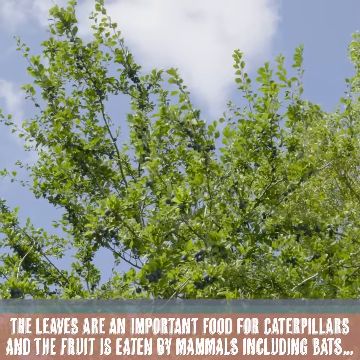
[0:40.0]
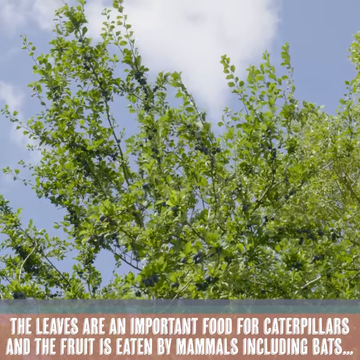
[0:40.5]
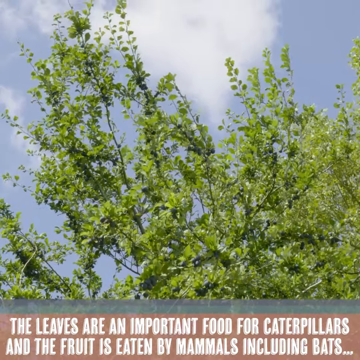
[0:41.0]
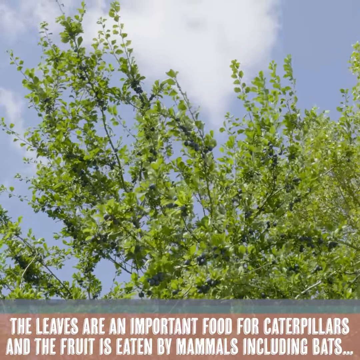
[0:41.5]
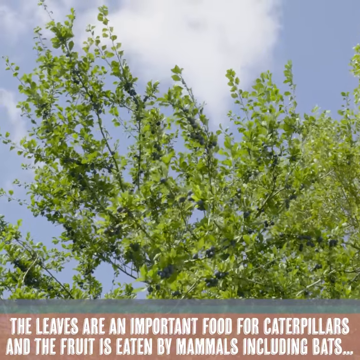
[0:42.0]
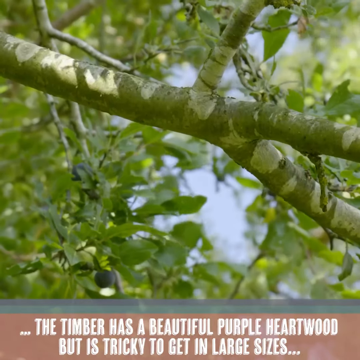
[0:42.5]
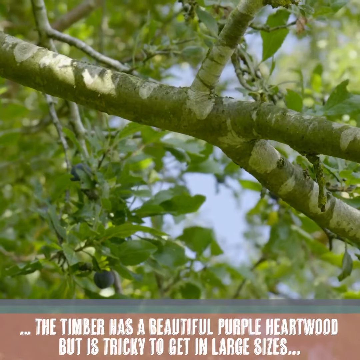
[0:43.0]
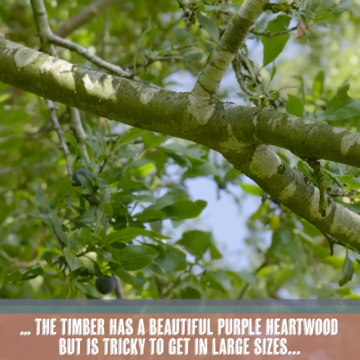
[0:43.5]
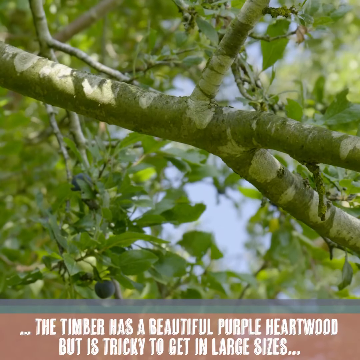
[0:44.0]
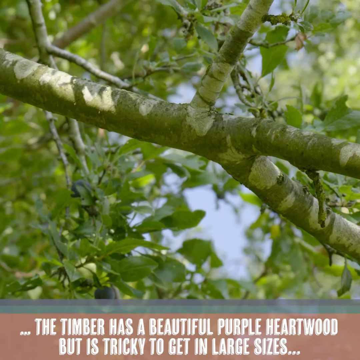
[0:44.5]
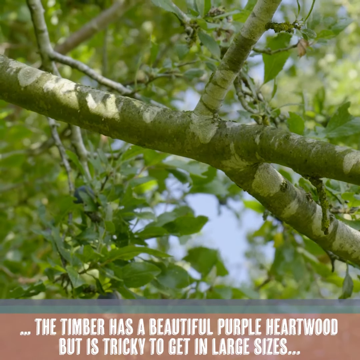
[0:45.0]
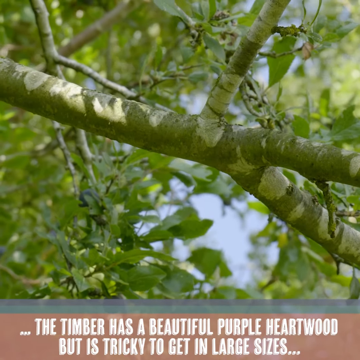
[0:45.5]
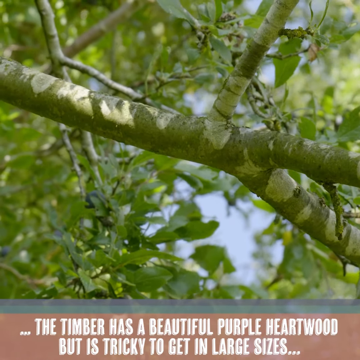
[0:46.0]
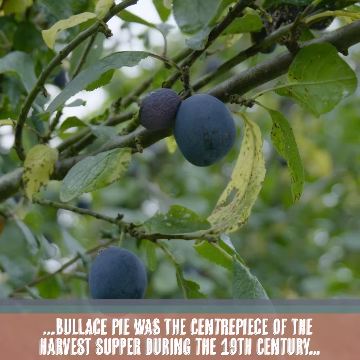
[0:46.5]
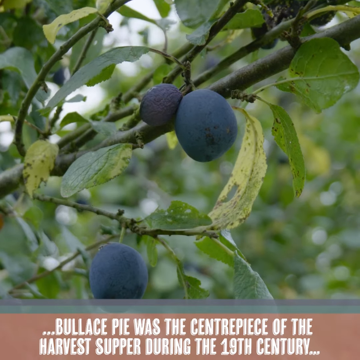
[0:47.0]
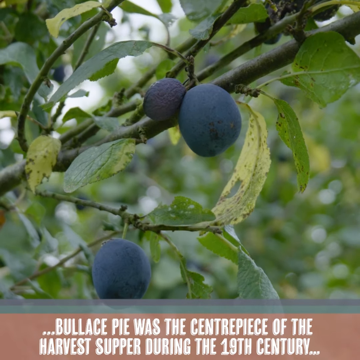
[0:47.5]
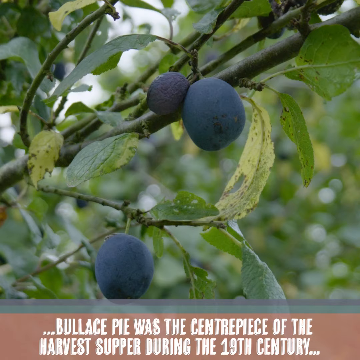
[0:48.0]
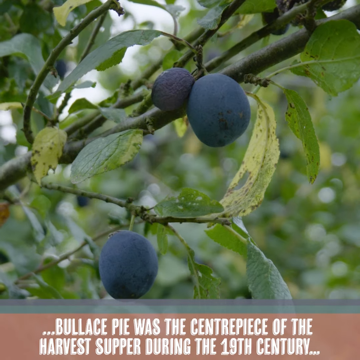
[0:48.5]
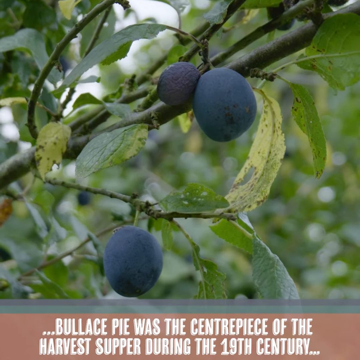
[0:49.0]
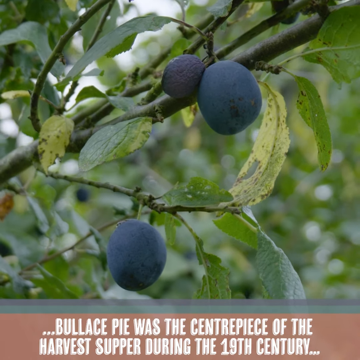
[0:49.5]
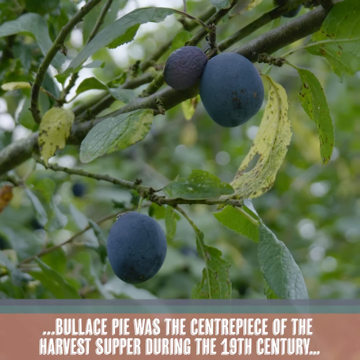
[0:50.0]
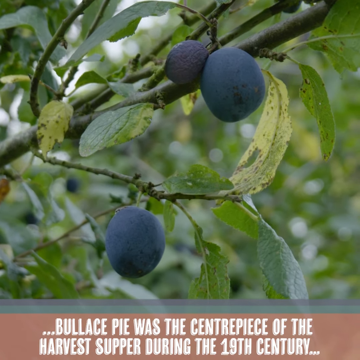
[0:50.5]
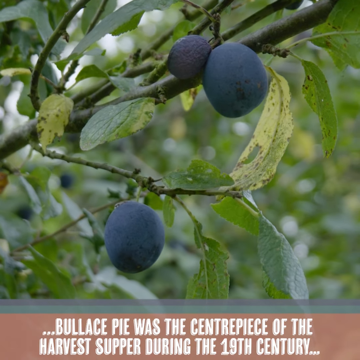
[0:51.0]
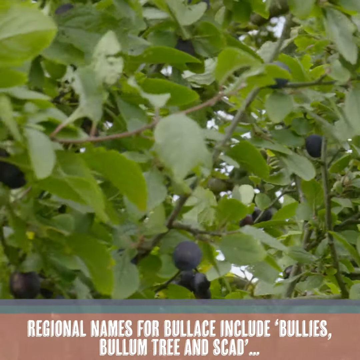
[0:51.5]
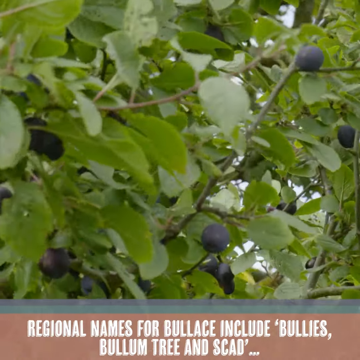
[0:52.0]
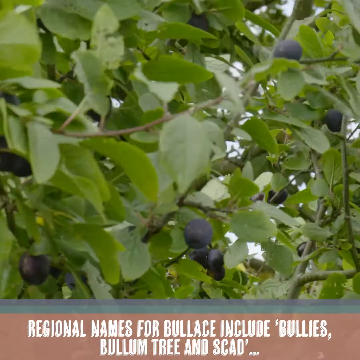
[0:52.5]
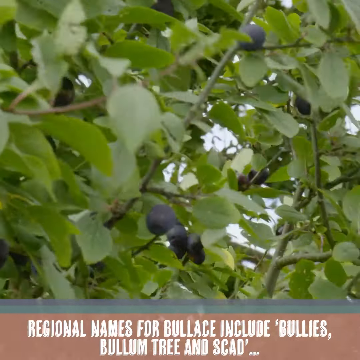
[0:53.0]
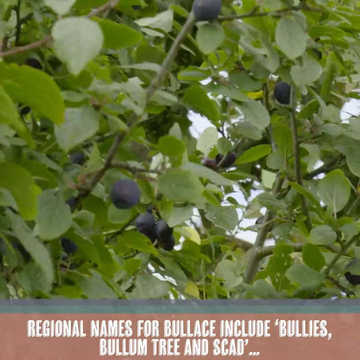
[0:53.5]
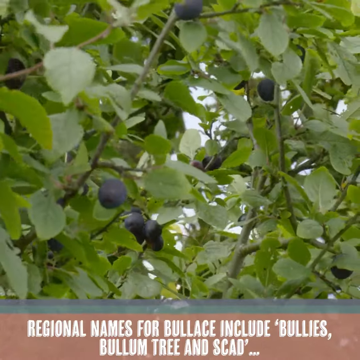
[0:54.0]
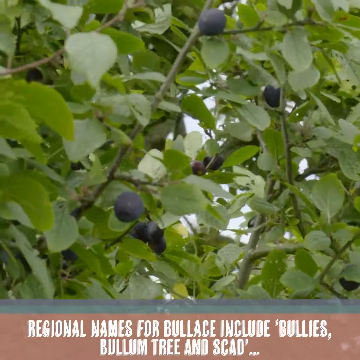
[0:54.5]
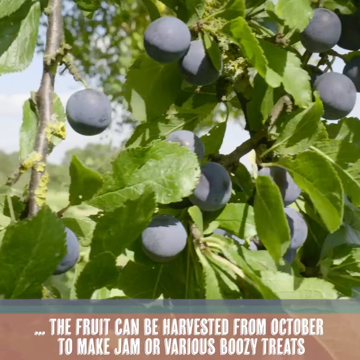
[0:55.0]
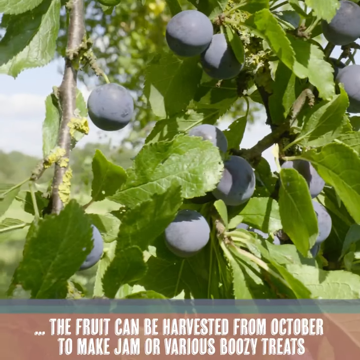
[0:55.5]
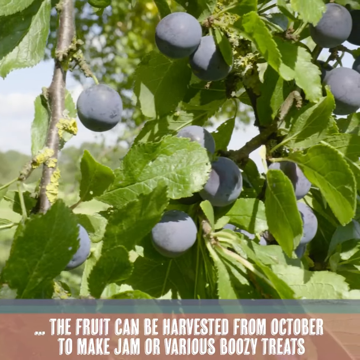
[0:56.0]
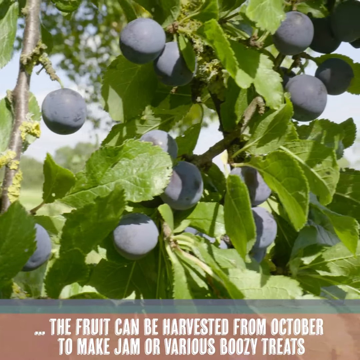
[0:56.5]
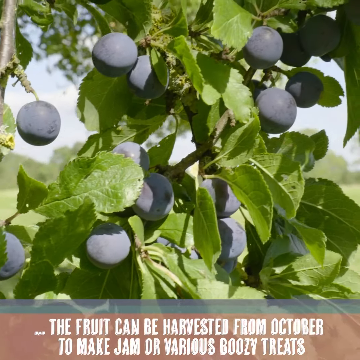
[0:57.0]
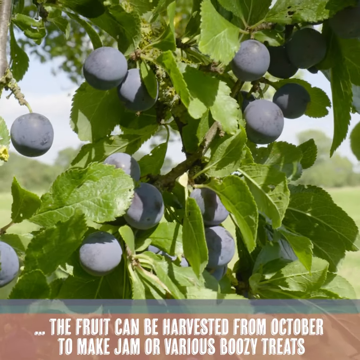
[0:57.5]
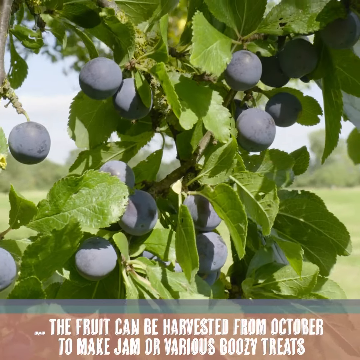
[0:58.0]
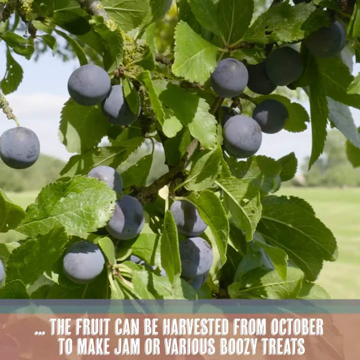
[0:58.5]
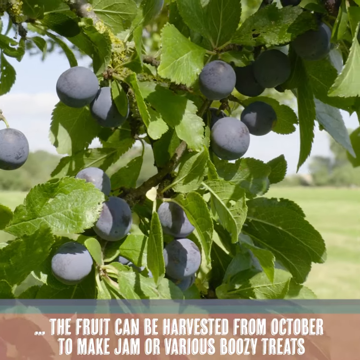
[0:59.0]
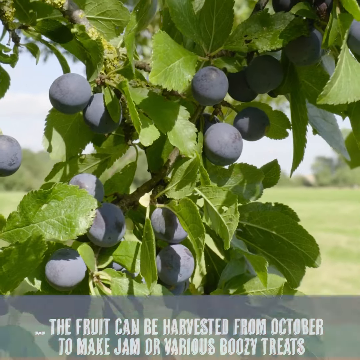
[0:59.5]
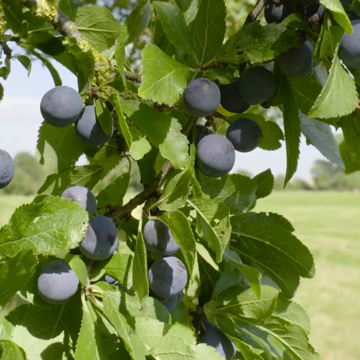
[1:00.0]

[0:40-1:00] A faraway view shows the top part of a tree with purplish blue fruit all over it, and text at the bottom reads "the leaves are an important food for caterpillars and the fruit is eaten by mammals including bats." A close-up of a branch follows, with text beneath reading "the timber has a beautiful purple heartwood but is tricky to get in large sizes." Next is a close-up of a couple of branches and three fruits, with the text "bolus pie was the centerpiece of the harvest supper during the 19th century." Branches move in the wind with several bolus in the picture, and the text at the bottom reads "regional names for bolus include bullies, bullentry, and scad." Finally, a close-up of some branches shows about 11 fruits, with the text "the fruit can be harvested from October to make jam or various boozy treats."